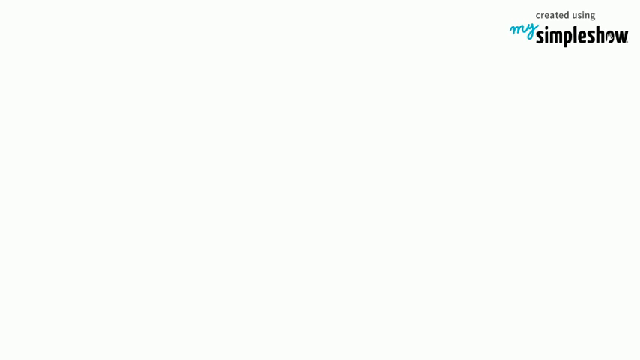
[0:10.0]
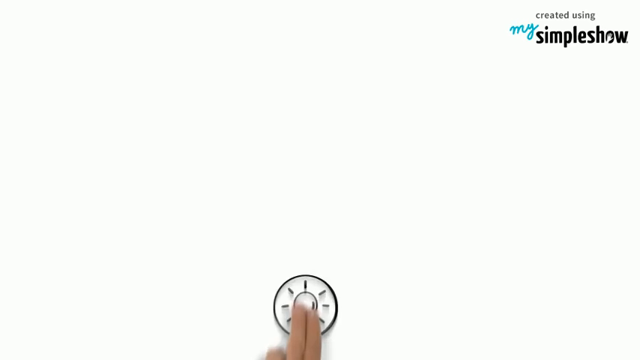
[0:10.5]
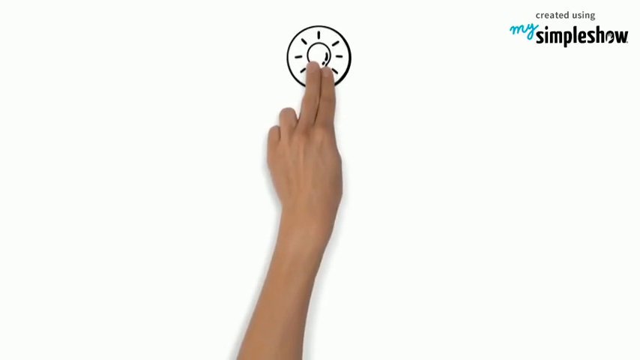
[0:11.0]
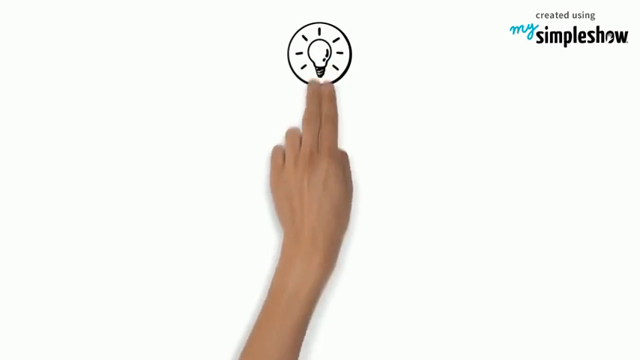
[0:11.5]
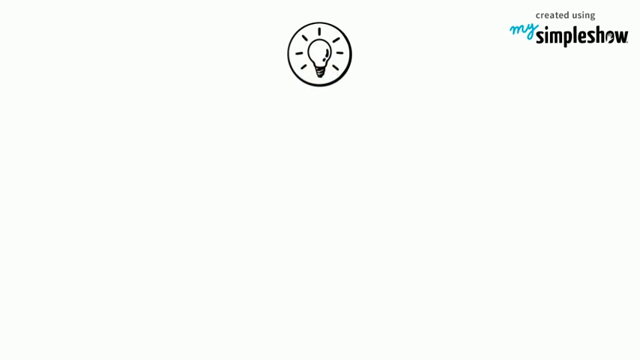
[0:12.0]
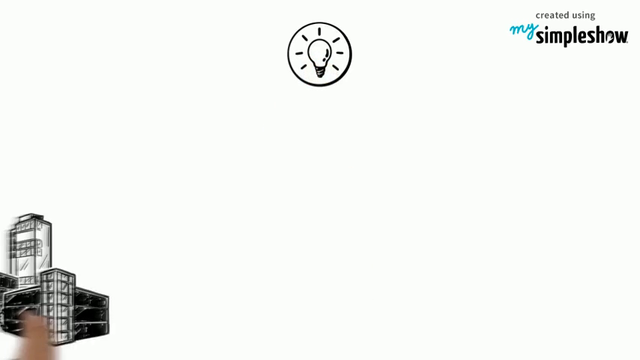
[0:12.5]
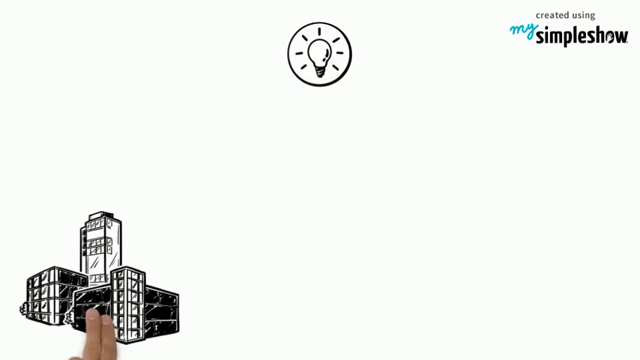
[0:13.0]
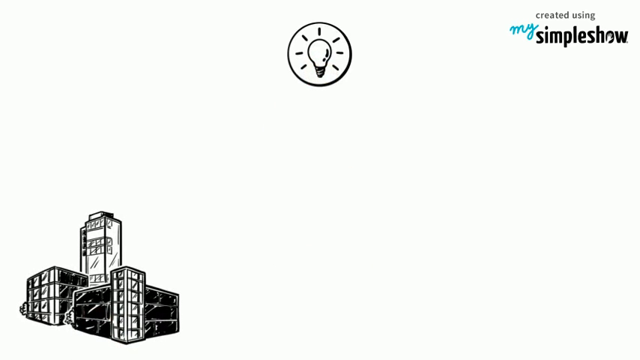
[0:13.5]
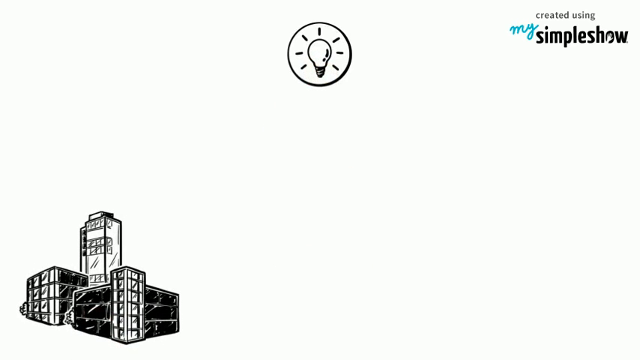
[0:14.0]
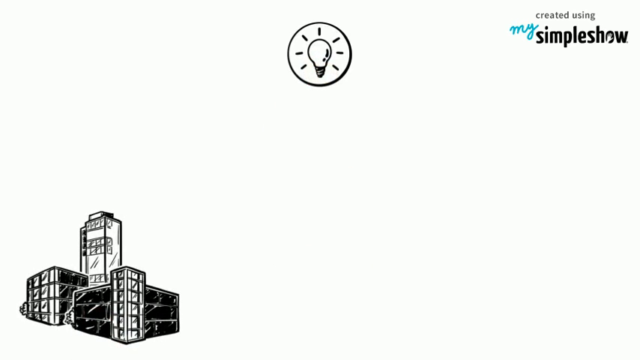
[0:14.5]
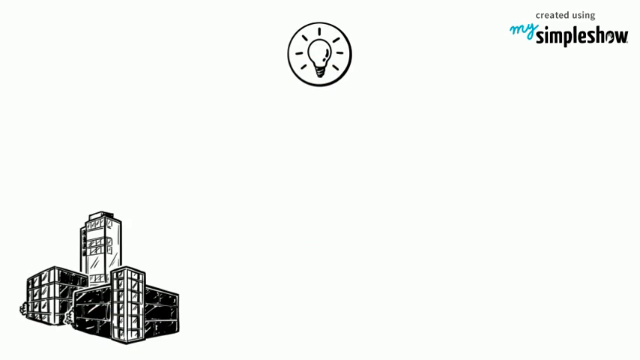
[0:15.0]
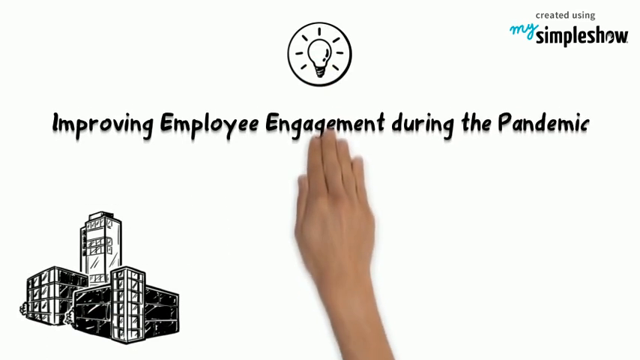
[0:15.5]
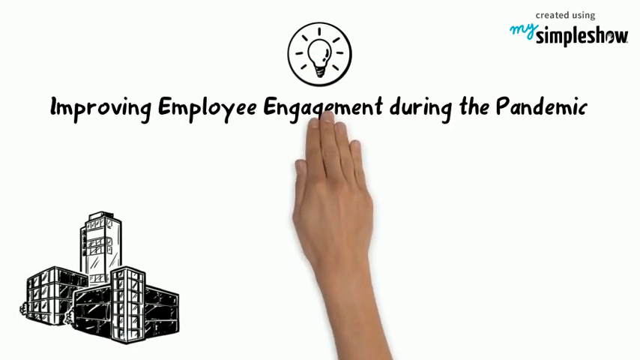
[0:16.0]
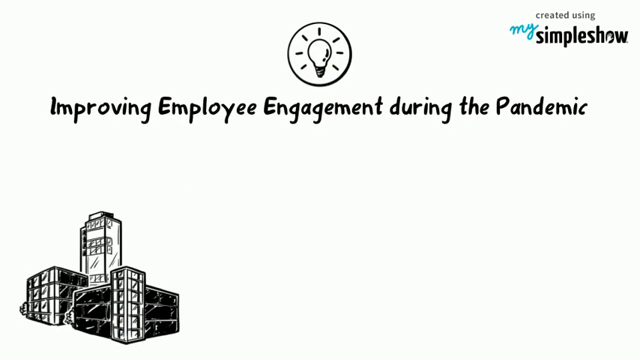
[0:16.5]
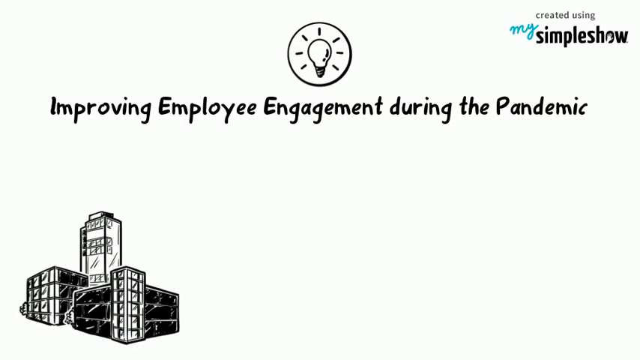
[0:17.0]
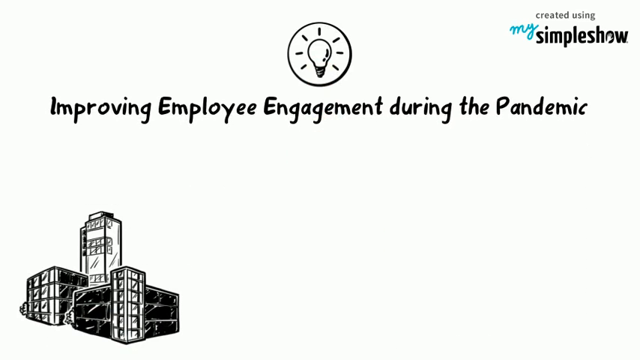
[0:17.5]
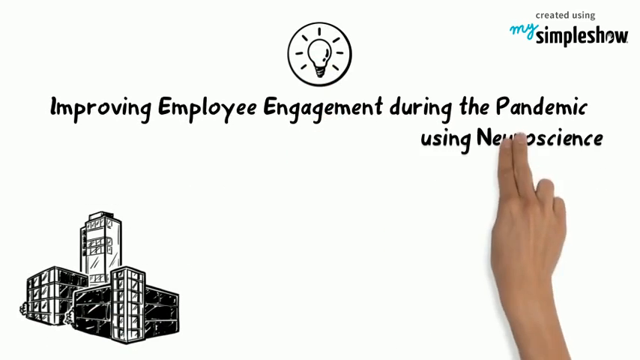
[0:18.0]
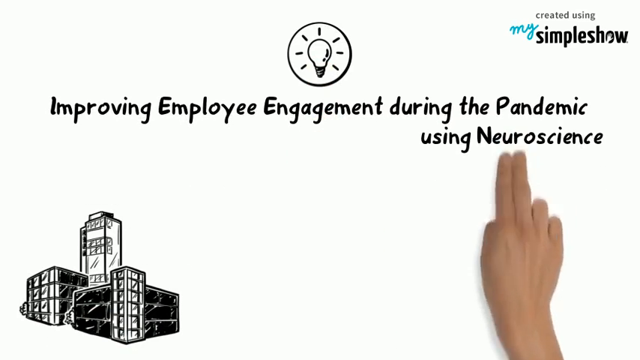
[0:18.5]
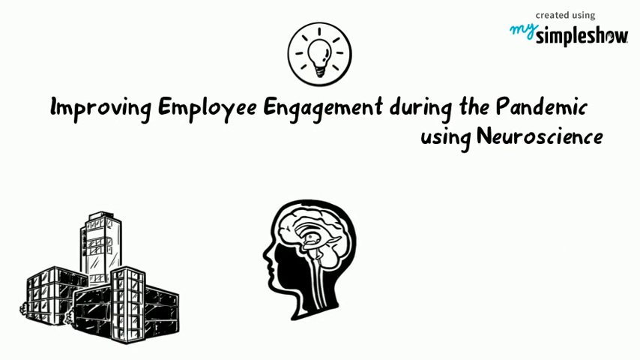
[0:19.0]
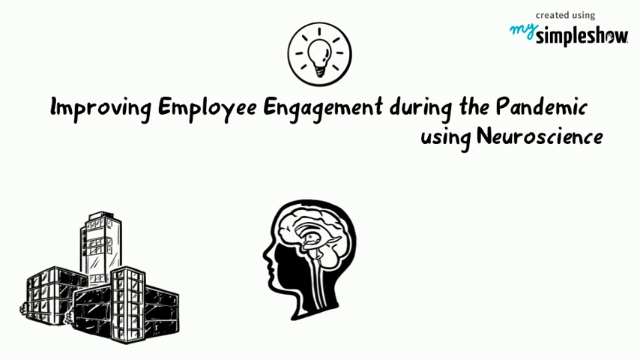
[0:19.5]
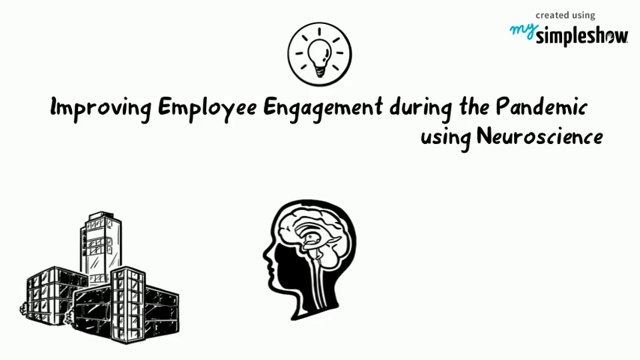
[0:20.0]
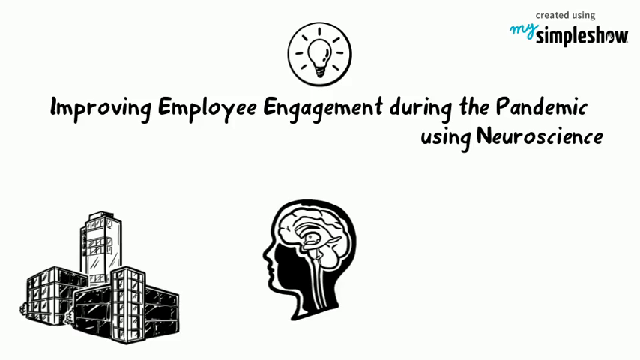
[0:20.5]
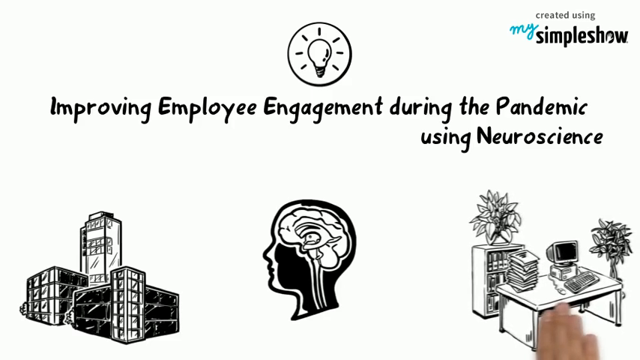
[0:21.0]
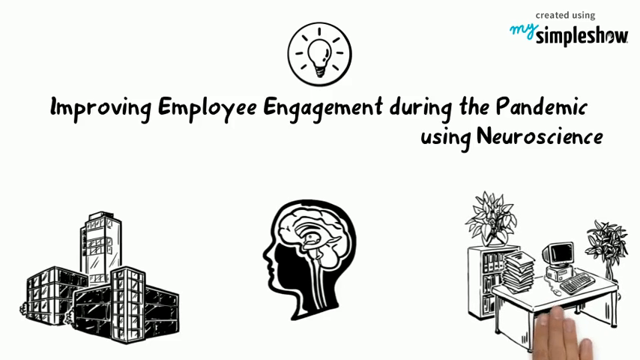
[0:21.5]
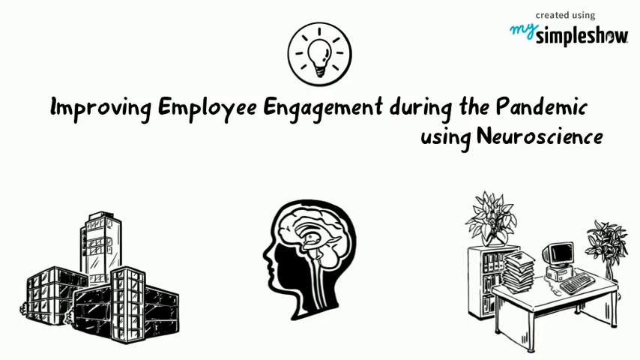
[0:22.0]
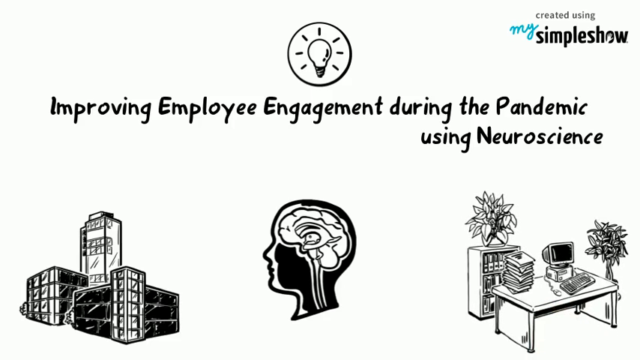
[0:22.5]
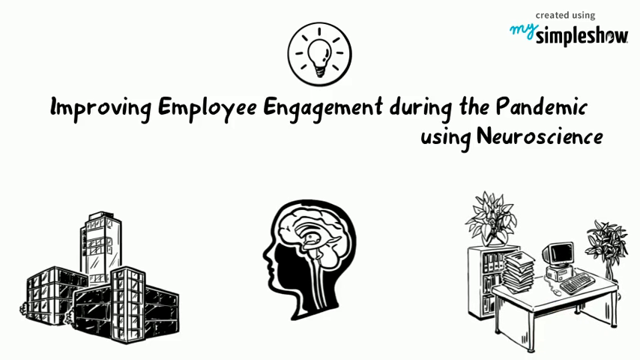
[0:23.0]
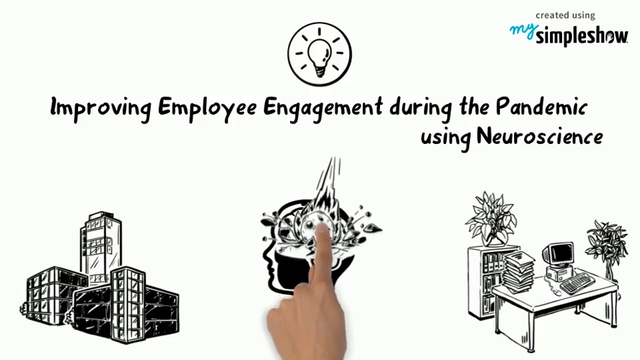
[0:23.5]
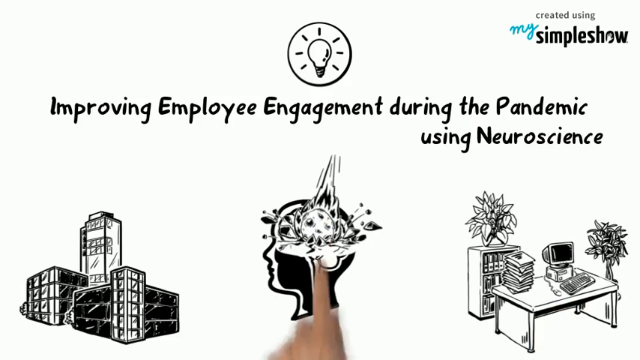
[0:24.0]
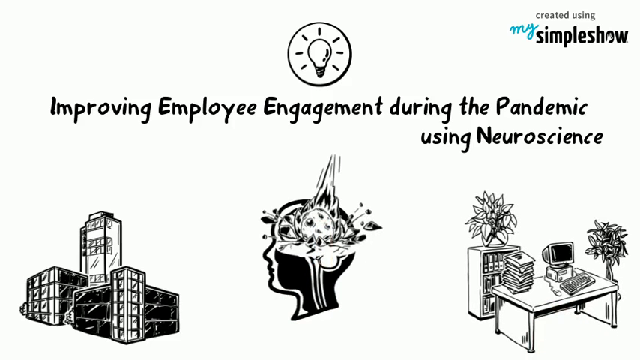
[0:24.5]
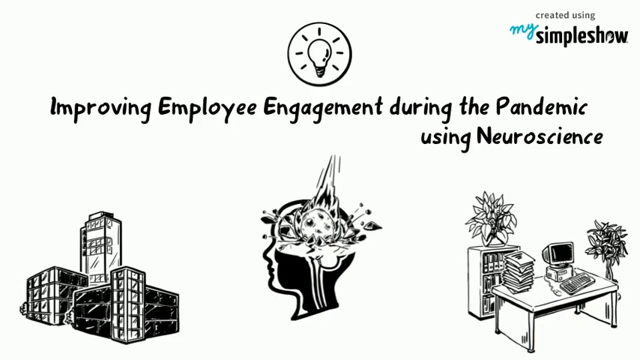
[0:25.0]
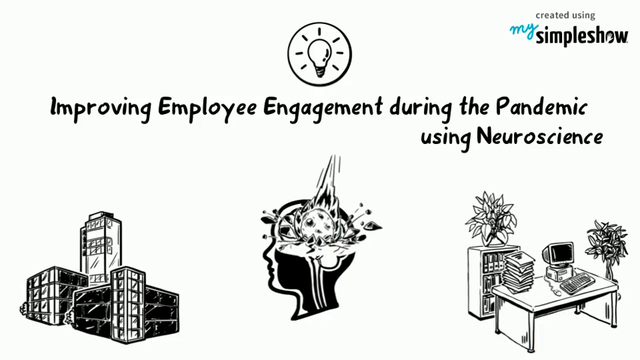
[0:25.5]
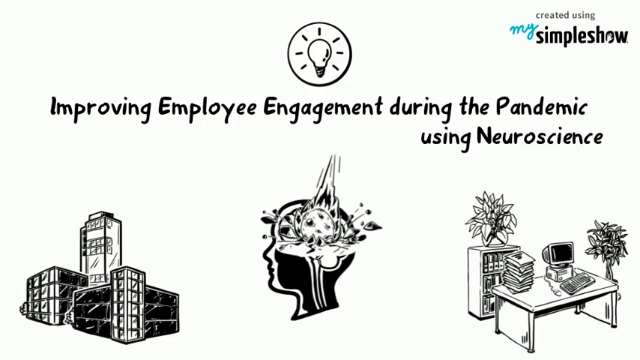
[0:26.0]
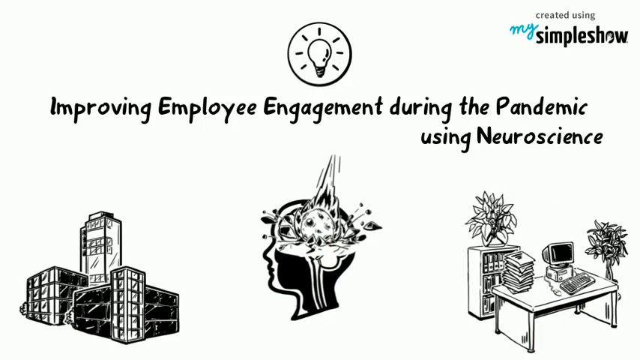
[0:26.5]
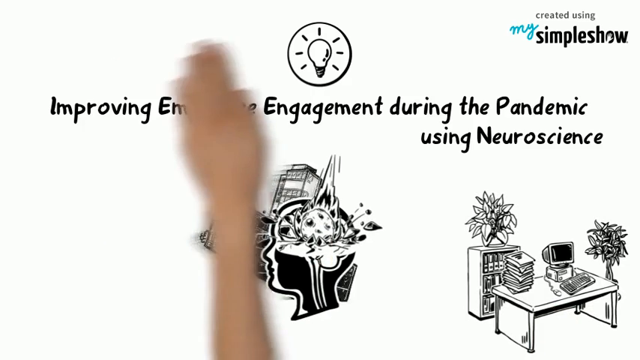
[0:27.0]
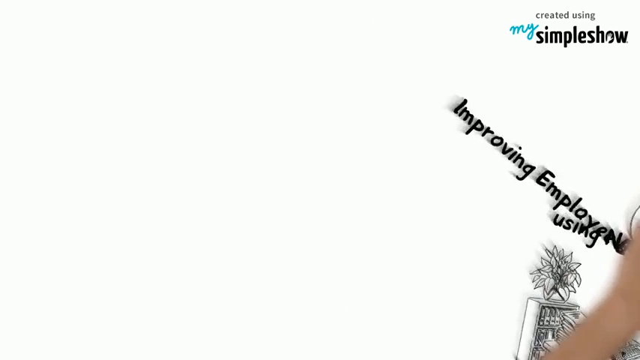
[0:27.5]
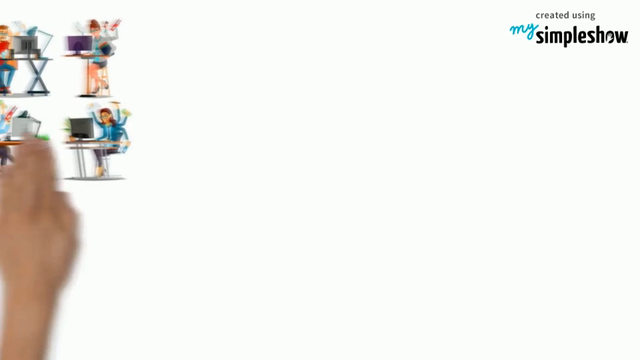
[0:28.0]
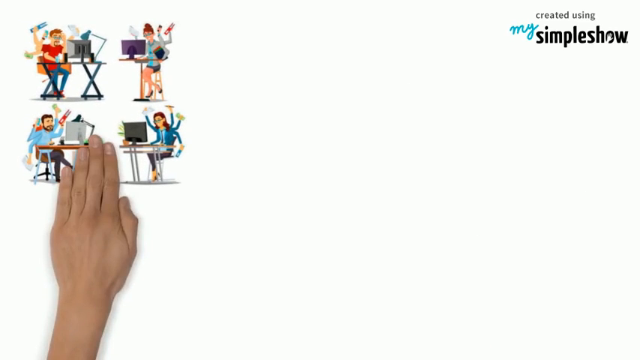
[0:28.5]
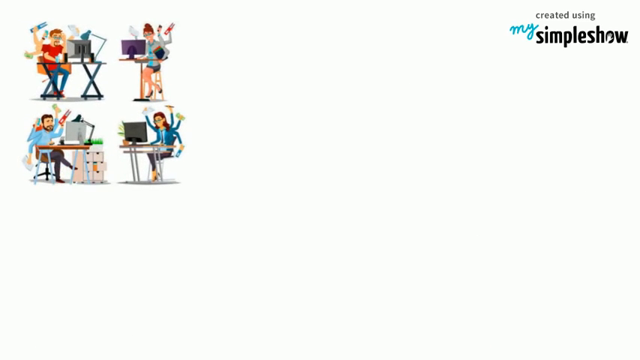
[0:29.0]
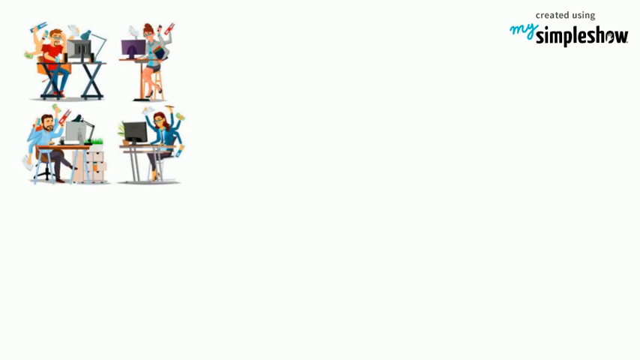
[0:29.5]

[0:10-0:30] A hand points to and displays a bulb. The video was created using a platform called My Simple Show. High-rise buildings with different numbers of floors appear on the left-hand side. A hand displays the sentence "improving employee engagements during the pandemic using neuroscience." Then a woman's head showing the brain appears. There appears to be a desk with a computer, system units, a keyboard and a stack of books on it, with a flower vase by the side. Behind the desk with the computer is a shelf holding various books and flowers. A finger then seems to point out something like a plant on the woman's head.